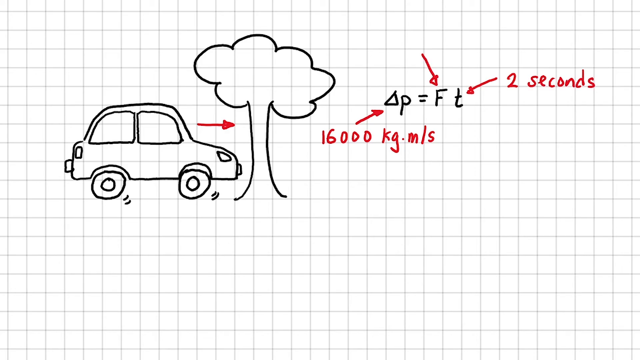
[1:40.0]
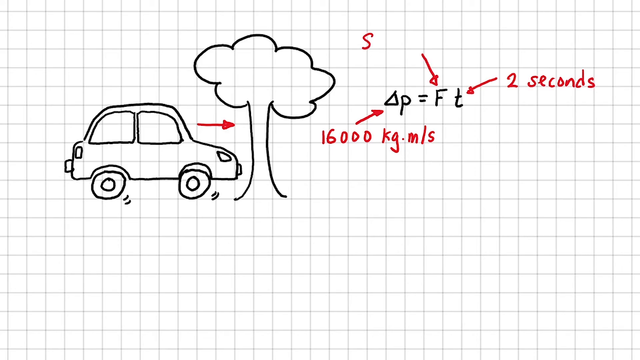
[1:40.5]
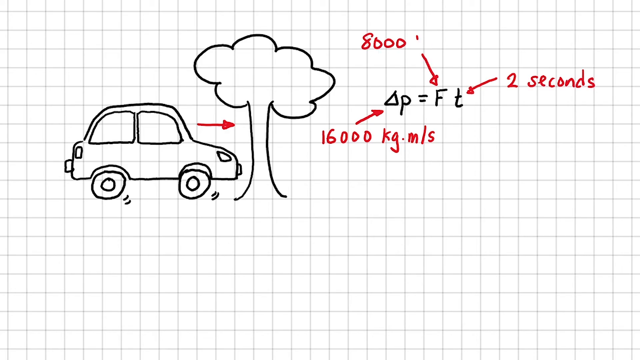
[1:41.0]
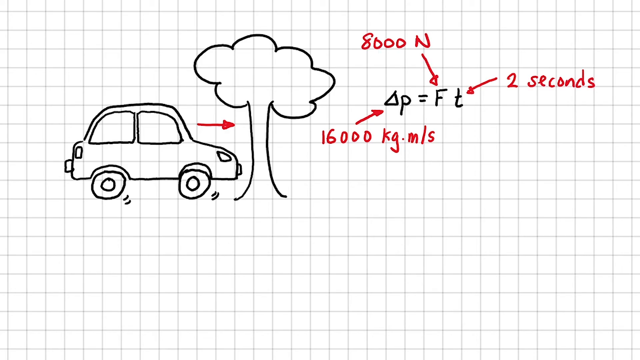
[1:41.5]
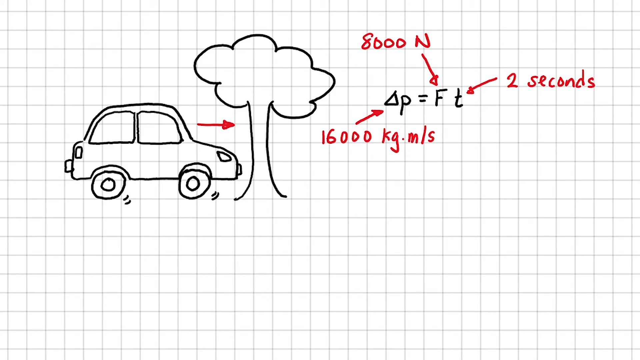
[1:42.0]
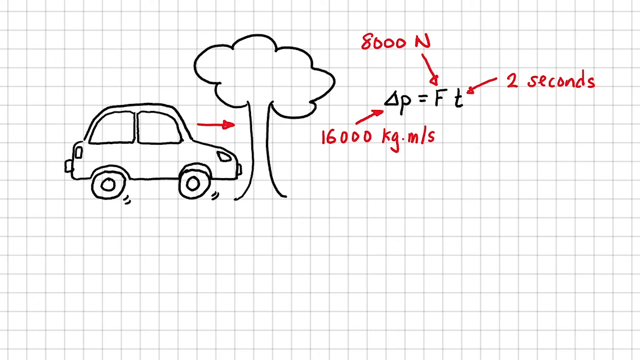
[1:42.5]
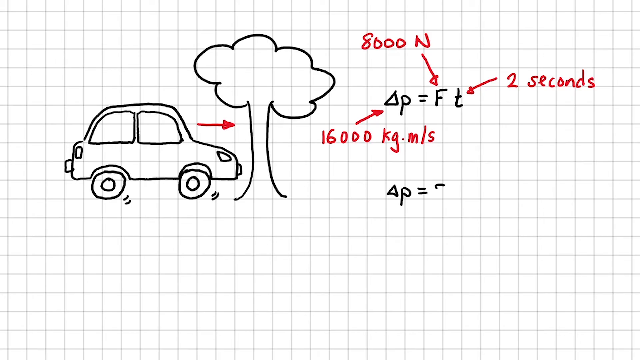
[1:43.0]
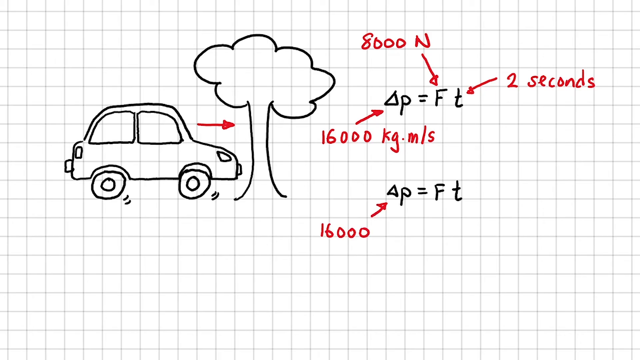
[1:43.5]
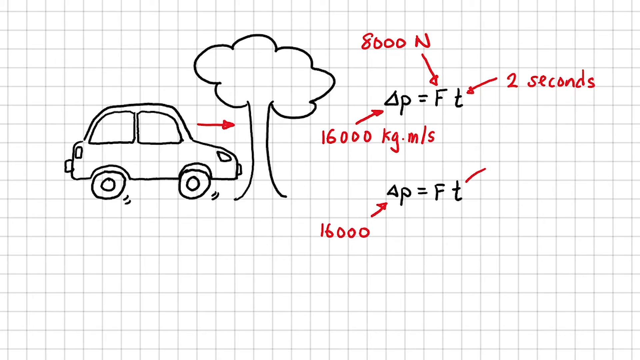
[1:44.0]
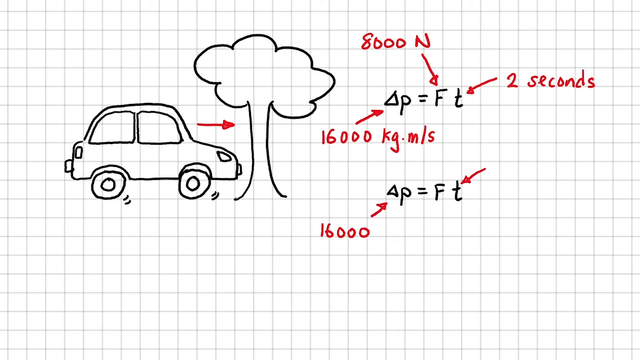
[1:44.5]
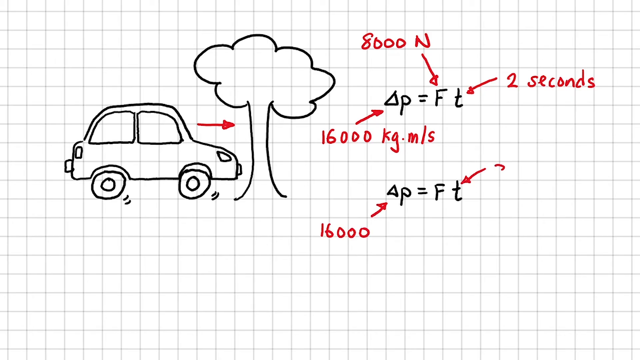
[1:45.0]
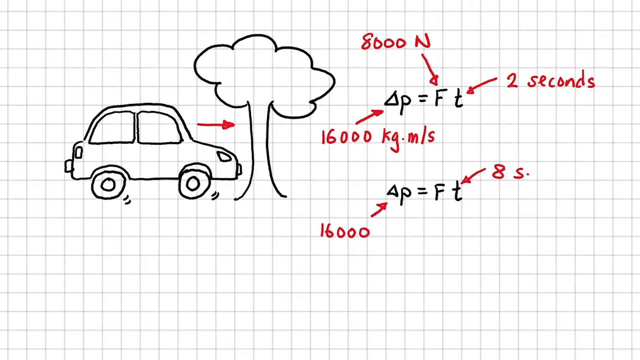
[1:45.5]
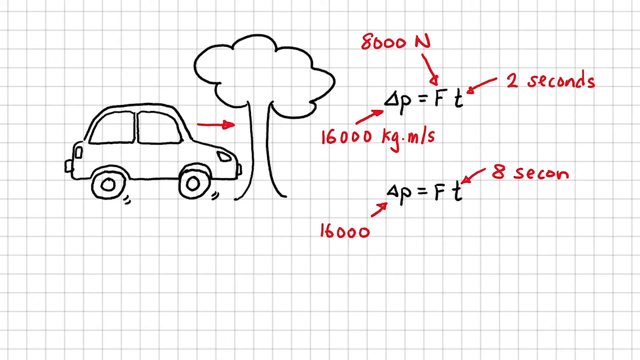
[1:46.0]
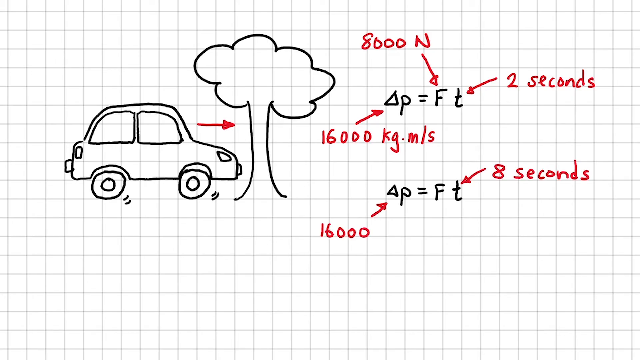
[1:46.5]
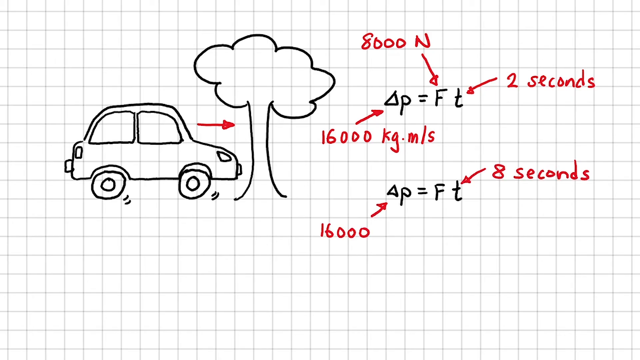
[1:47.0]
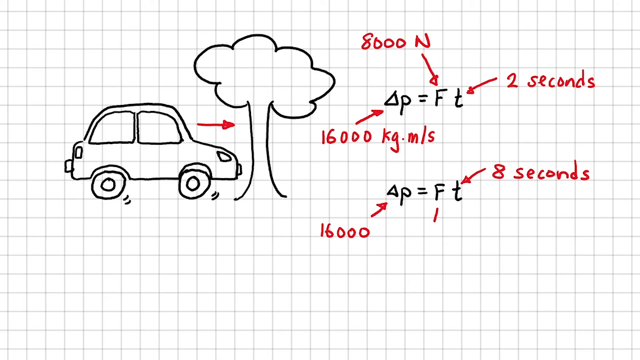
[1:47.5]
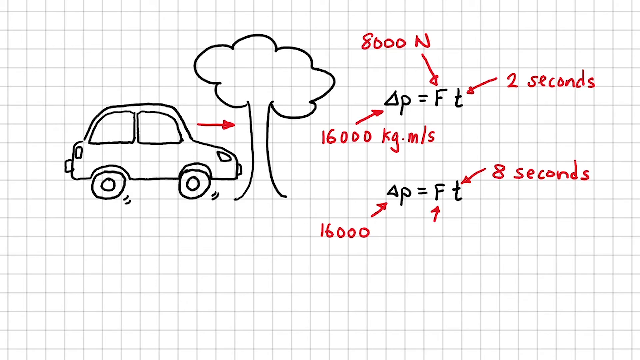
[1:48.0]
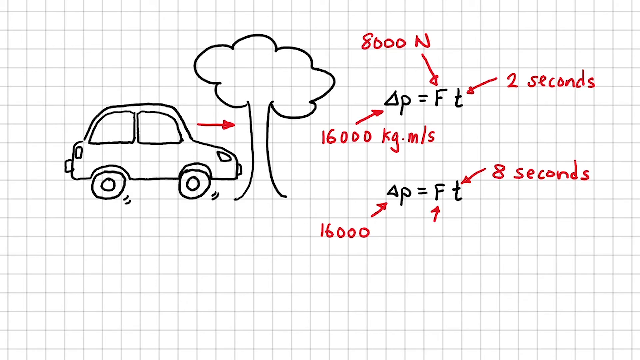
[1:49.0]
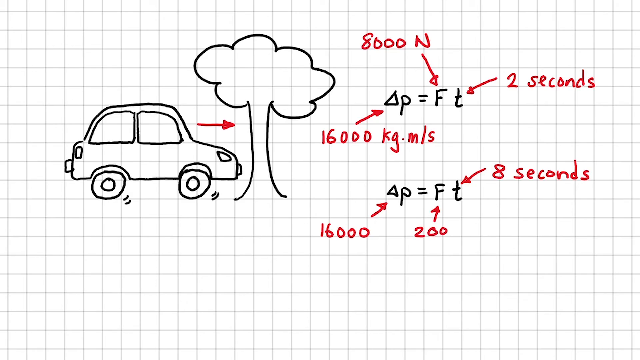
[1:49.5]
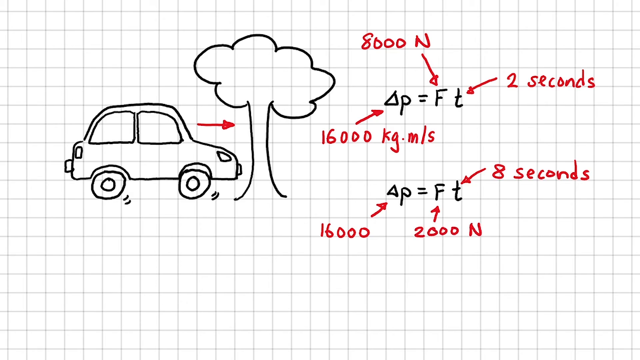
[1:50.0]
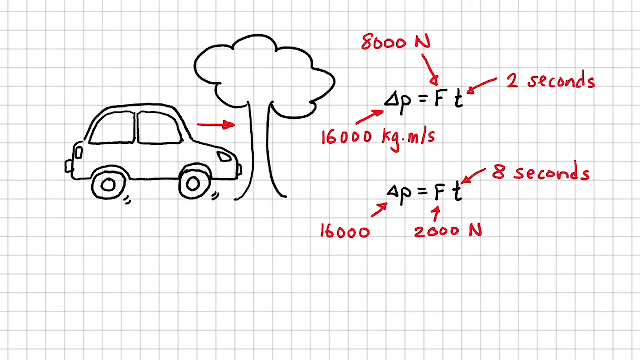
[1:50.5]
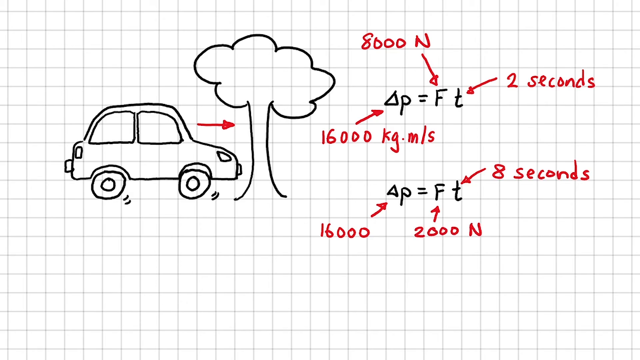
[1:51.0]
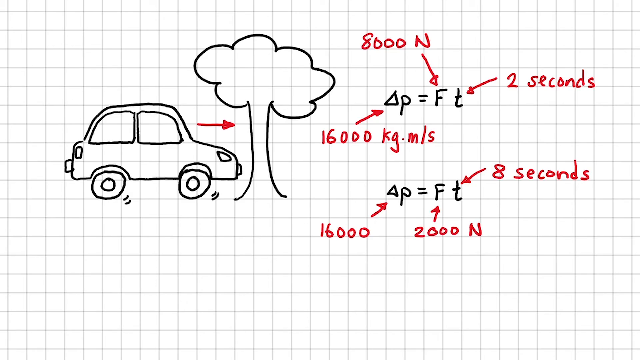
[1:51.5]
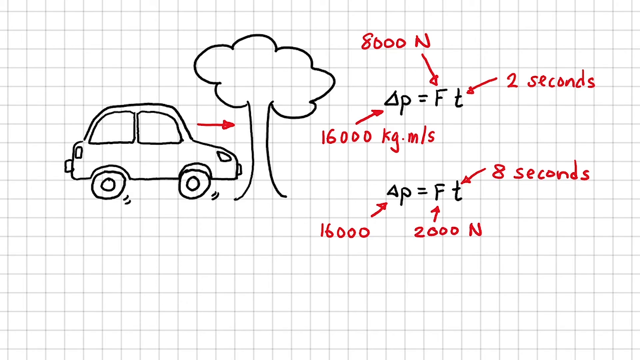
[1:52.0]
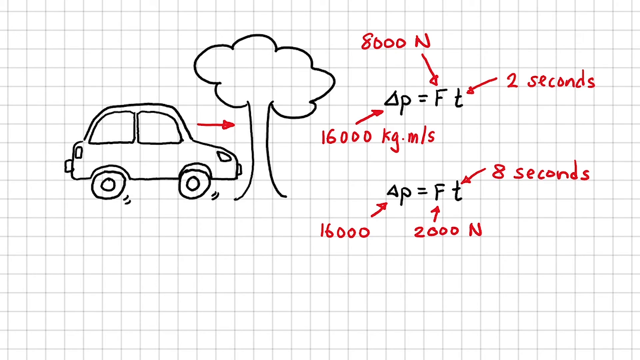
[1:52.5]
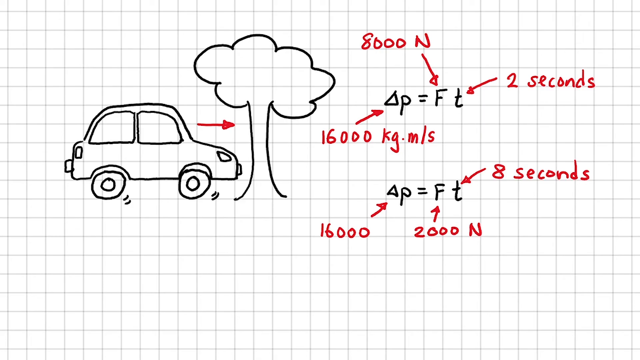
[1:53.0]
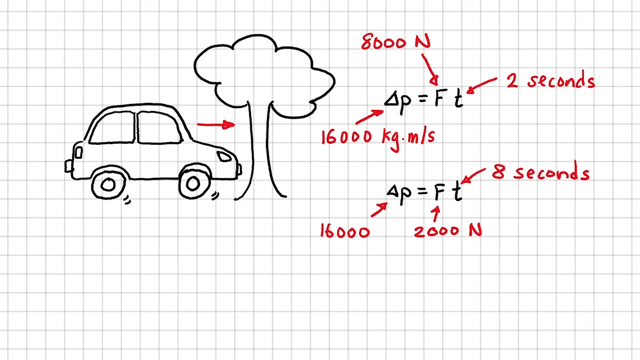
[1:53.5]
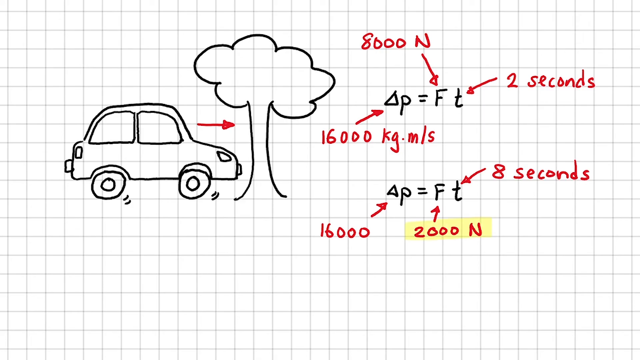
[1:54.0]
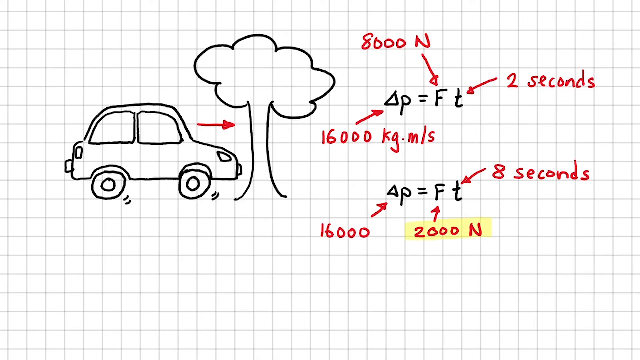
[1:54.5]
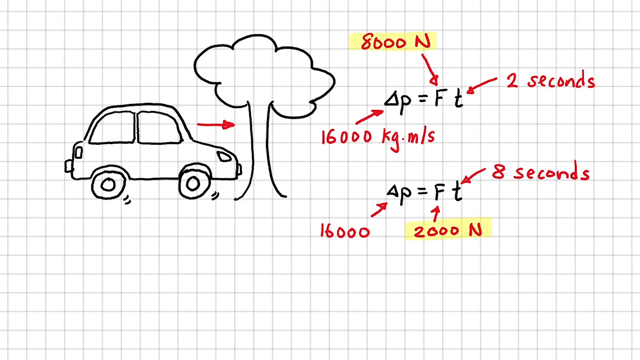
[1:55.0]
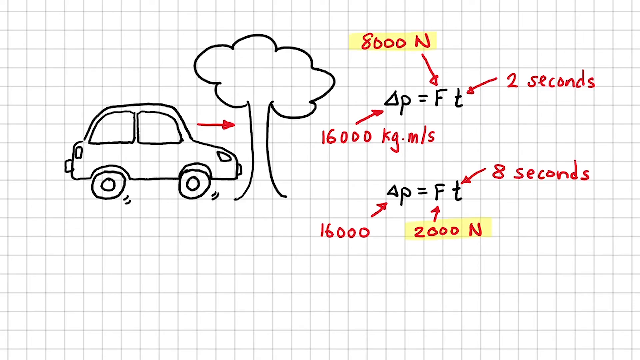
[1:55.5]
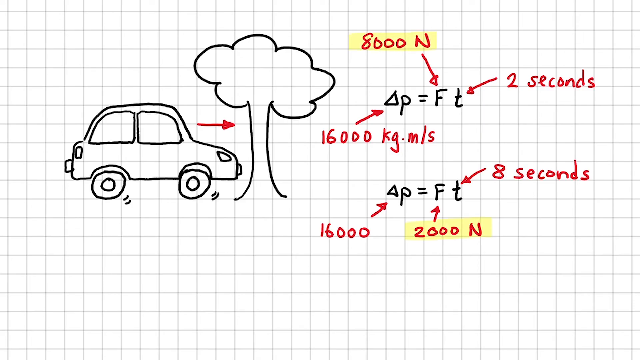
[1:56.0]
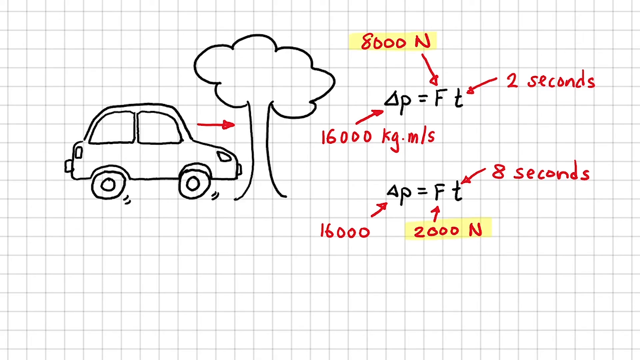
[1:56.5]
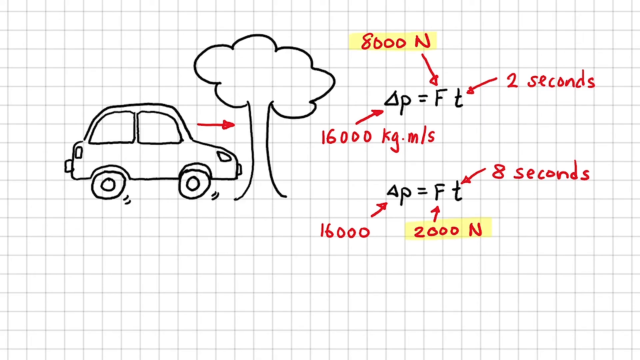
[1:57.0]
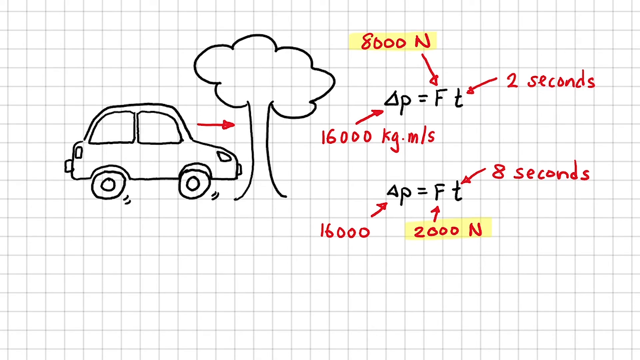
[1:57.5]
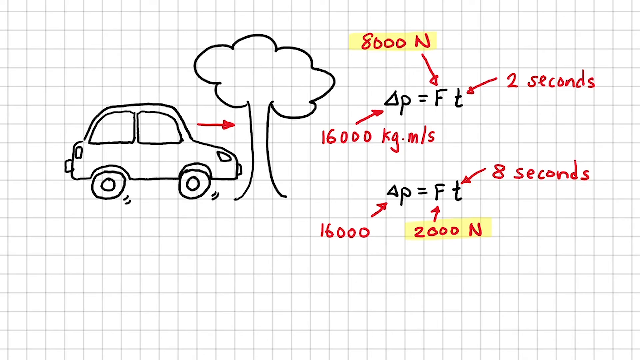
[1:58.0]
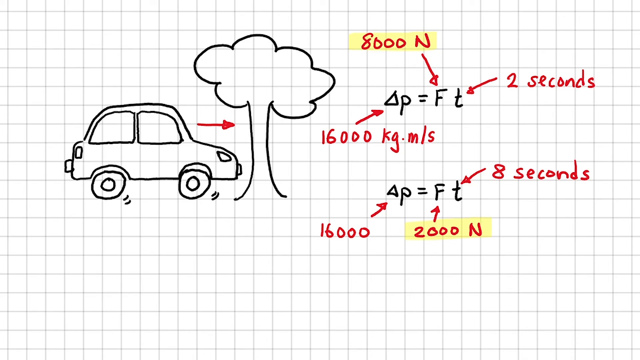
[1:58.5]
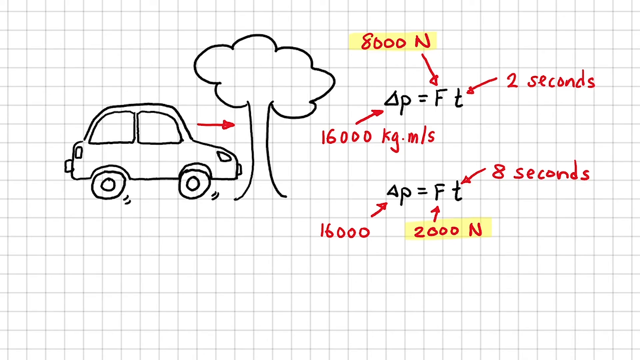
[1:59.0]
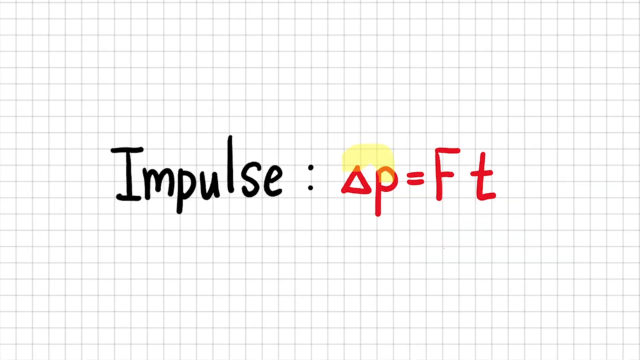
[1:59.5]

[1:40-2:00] A grid-patterned presentation slide shows a black outline sketch with a formula on the right. The diagram is a side view of a car followed by a tree in front of it, with a red arrow pointing toward the tree drawn in the space between them. To the right of the tree, the formula "delta p = F t" is written in black. Red arrows point toward F and t, with "2 seconds" written in red beside the arrow pointing at t. Another arrow at the bottom points toward the delta symbol, with "16,000 kg m/s" written below it. "8000 N" is written above the arrow pointing at F. Another formula, "delta P = F T", is written below, with a red arrow pointing toward its delta symbol and "16,000" written below. Another arrow pointing at t is drawn with "8 seconds" written on its right, then a small red arrow pointing toward F is drawn with "2000N" written below it. The 2000N and the 8000N above are highlighted in yellow. The slide then changes, revealing the impulse formula.